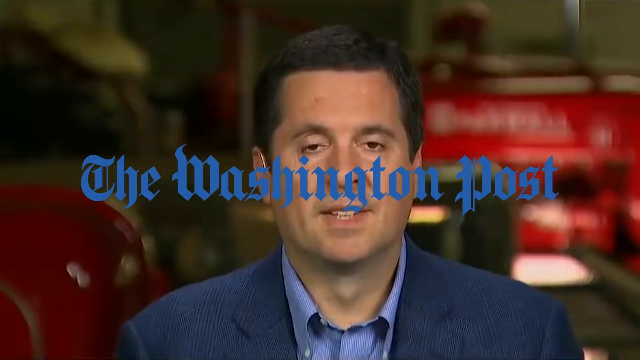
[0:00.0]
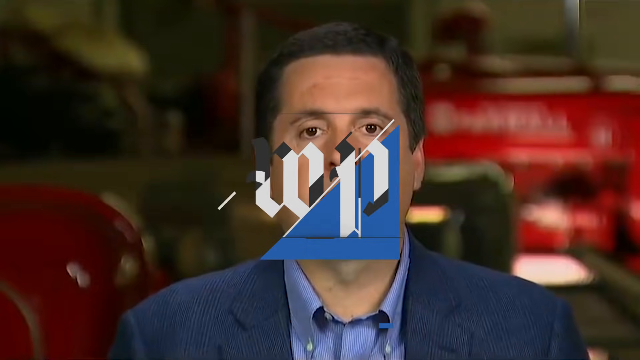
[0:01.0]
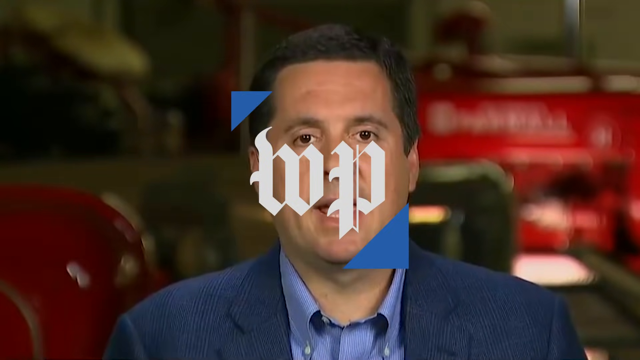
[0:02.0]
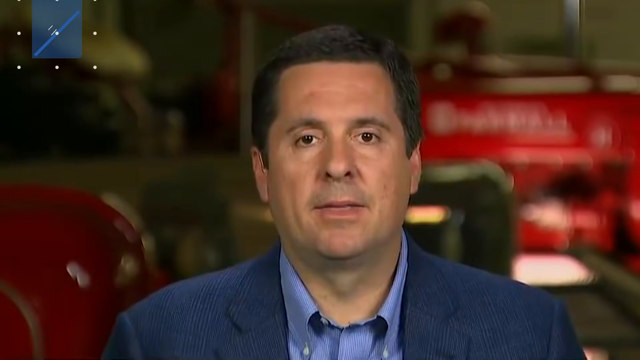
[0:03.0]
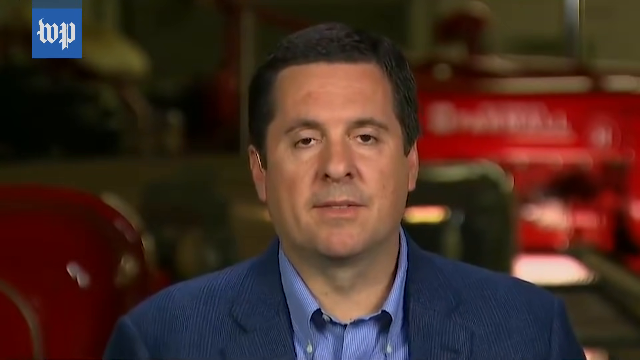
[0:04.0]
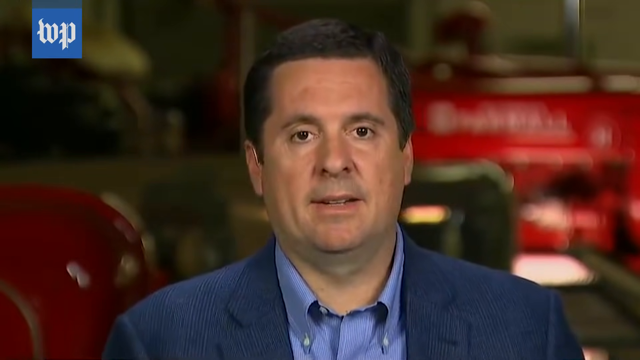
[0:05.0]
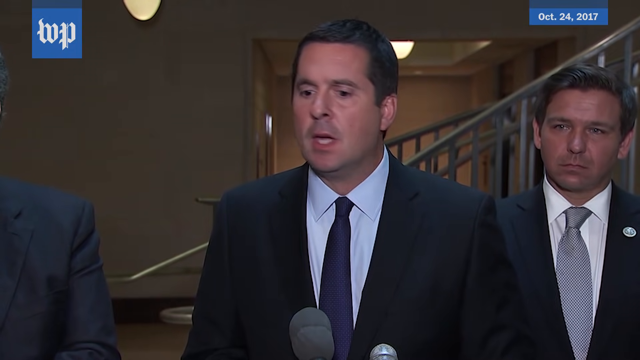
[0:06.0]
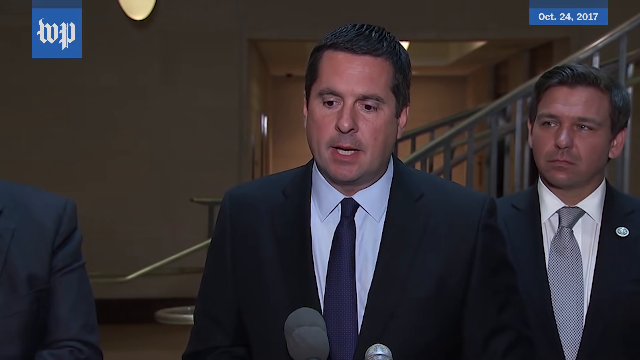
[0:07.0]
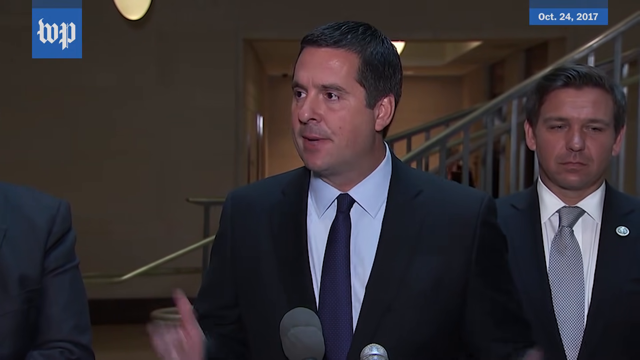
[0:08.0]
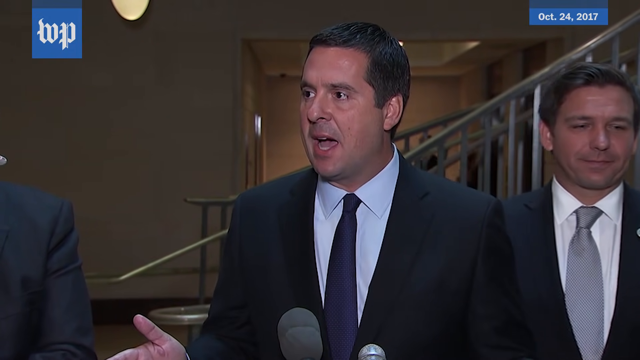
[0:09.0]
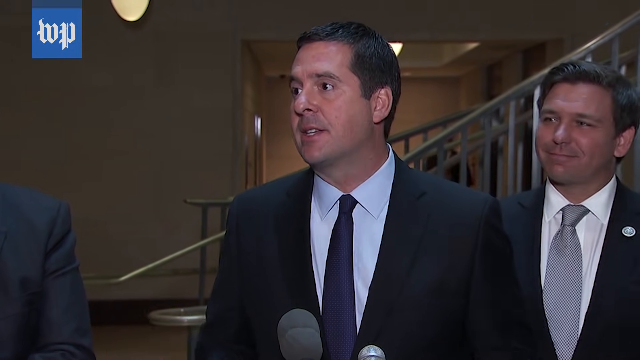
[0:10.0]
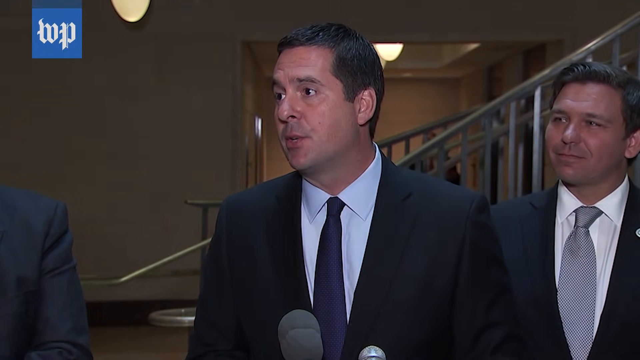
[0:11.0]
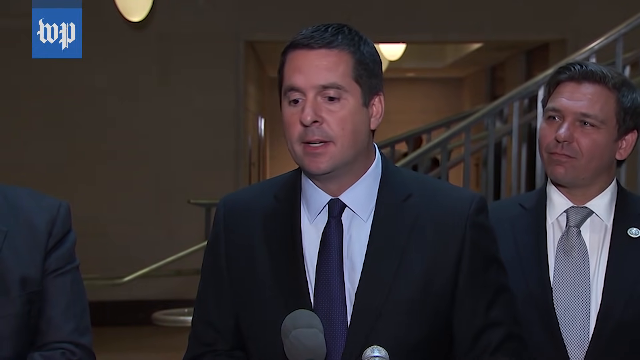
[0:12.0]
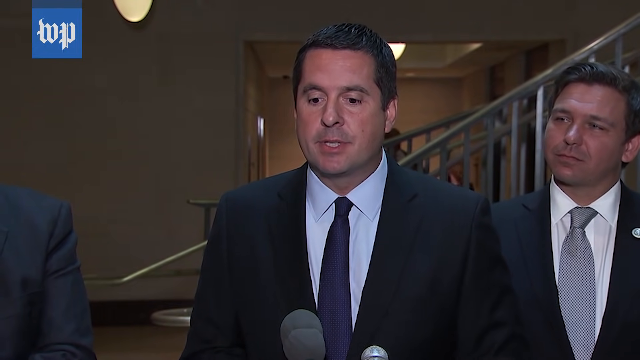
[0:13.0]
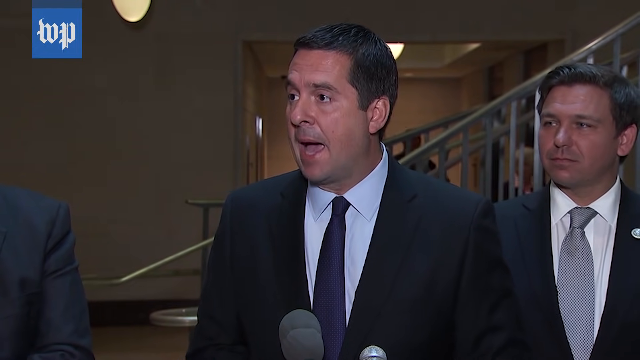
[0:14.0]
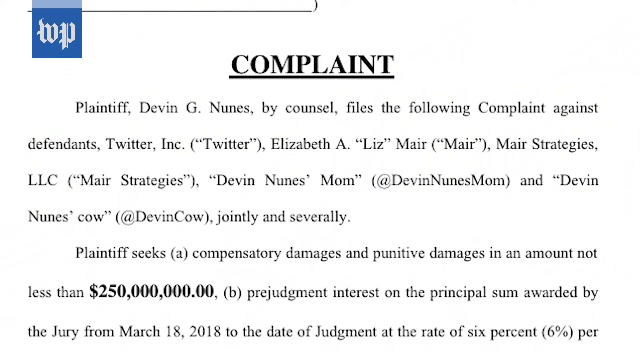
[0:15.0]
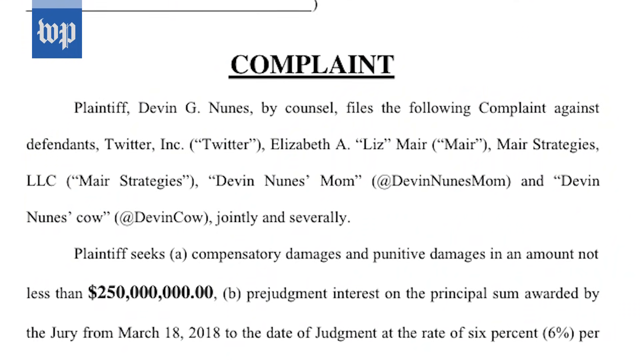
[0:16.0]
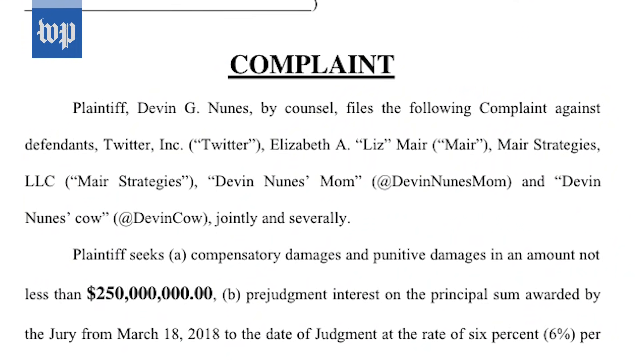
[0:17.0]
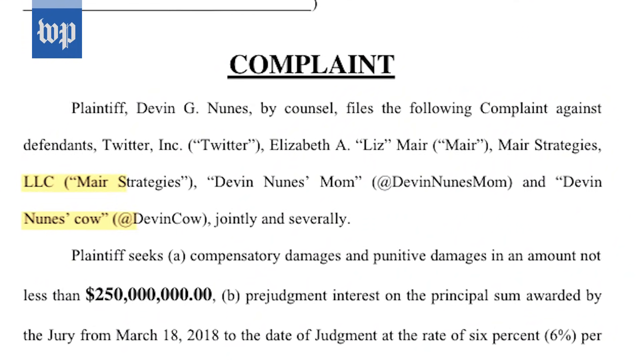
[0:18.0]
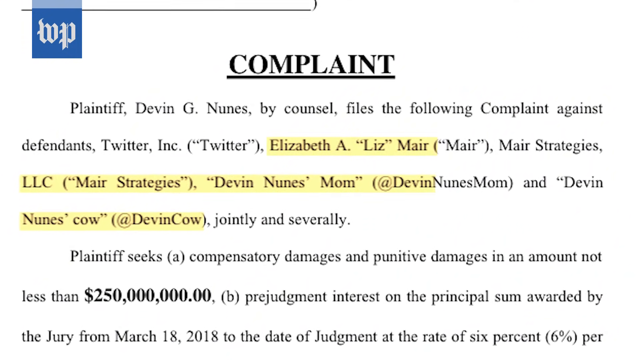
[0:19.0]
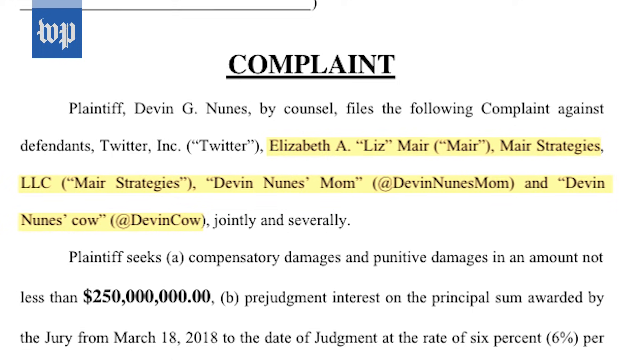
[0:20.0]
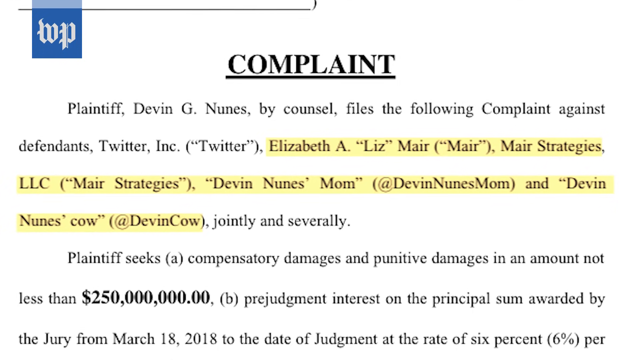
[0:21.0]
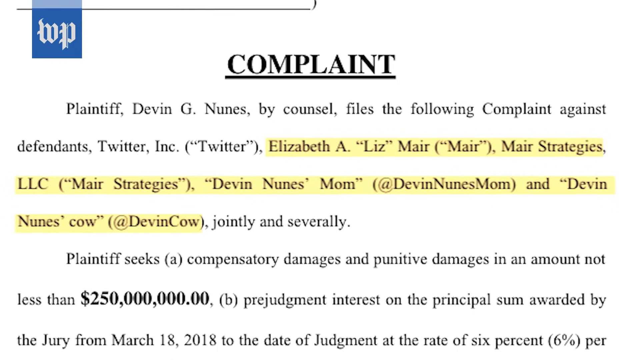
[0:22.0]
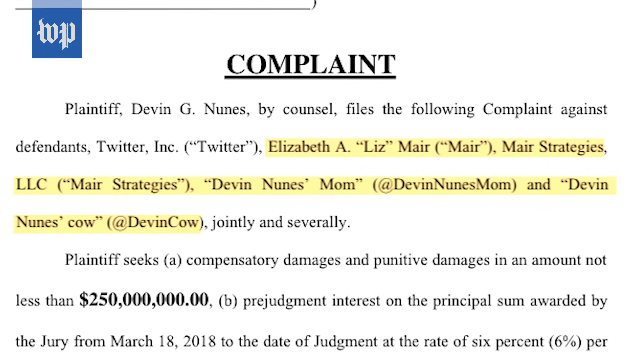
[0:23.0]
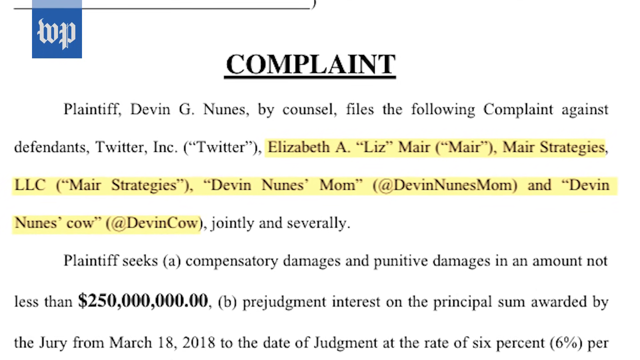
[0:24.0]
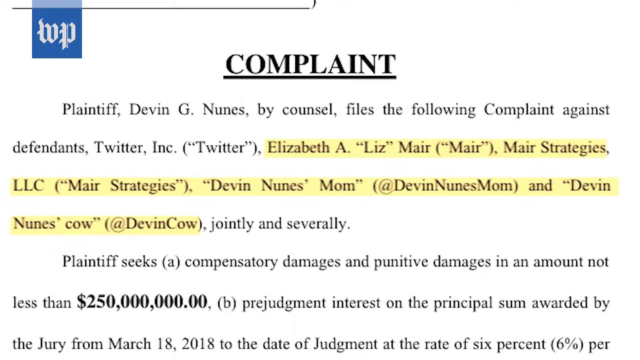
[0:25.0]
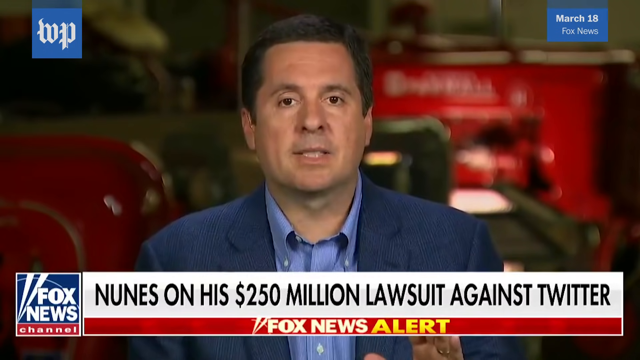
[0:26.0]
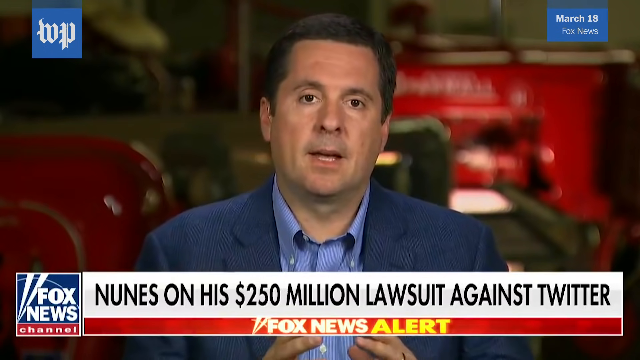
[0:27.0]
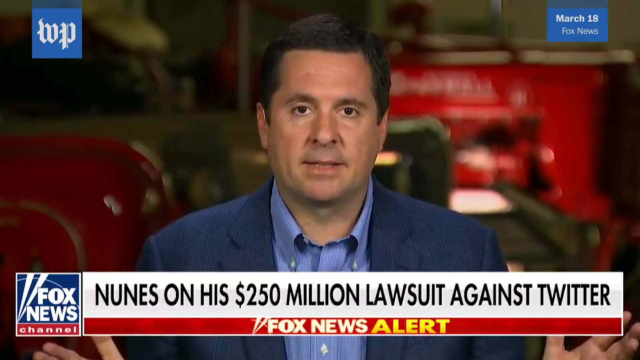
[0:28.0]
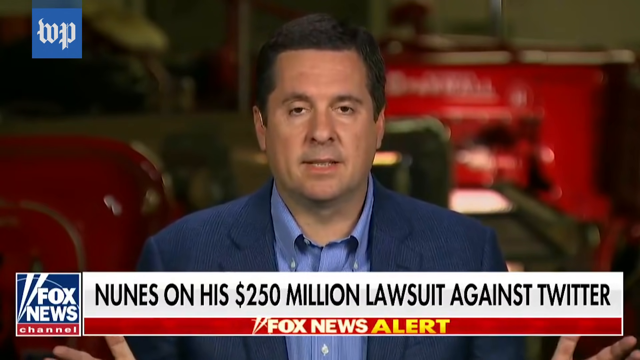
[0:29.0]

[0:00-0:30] The video is from the Washington Post. The first man shown is a white man with drowsy eyes, white teeth and well-trimmed black hair, wearing a blue coat with a light blue shirt; he is explaining something. A New York Post label comes on top of the image, and he continues explaining. Three men then pop up on the screen, all wearing black suits; the first has a blue tie with a black shirt, and another has a grey tie with a white shirt. They all seem very serious. The events are dated October 24th, 2017. The man continues explaining with signs and gestures. Next comes a photo of a document, a complaint, with text including "Plaintiff Devin G. Nunes" and "the following complaint against defendants," and stating compensatory damages and punitive damages "in an amount not less than $250 billion." Several names on the document are highlighted in yellow. The Fox News broadcast then continues with the headline "Nunes on his $250 million lawsuit against Twitter."